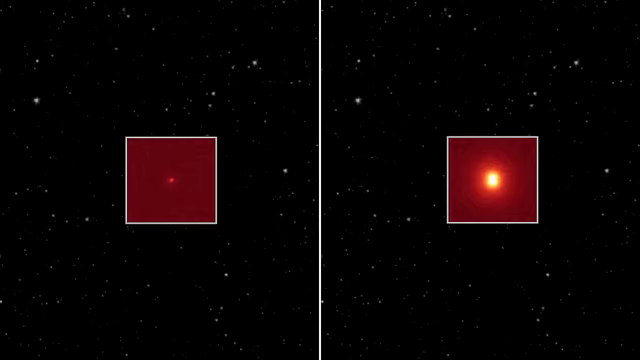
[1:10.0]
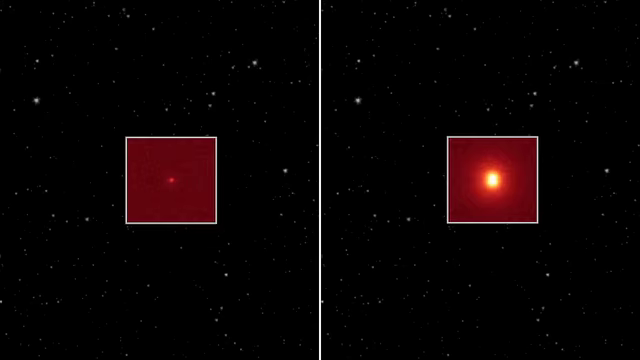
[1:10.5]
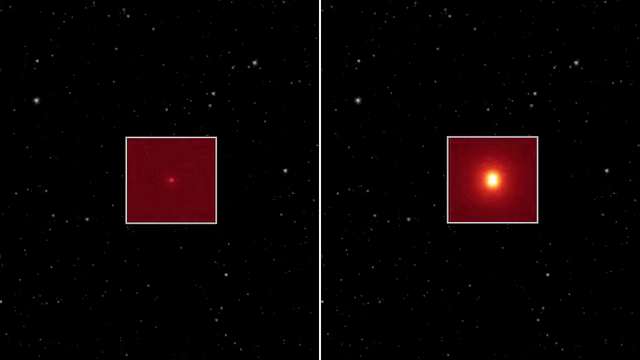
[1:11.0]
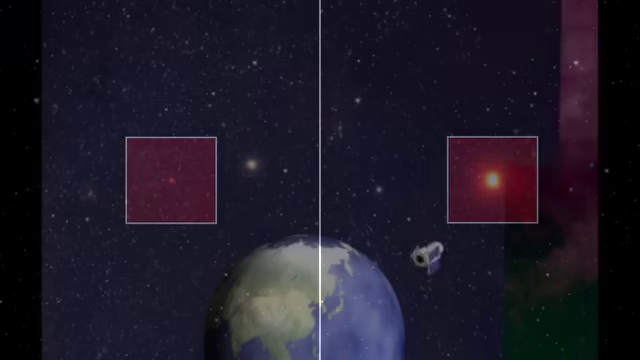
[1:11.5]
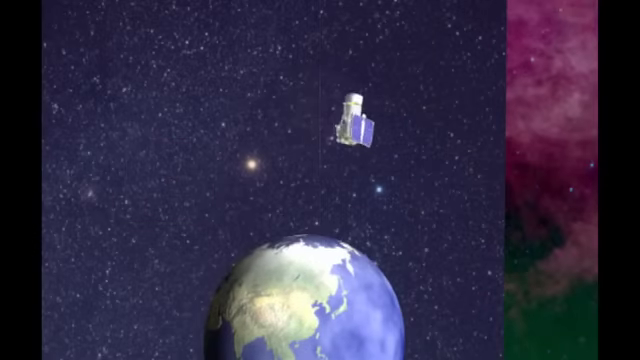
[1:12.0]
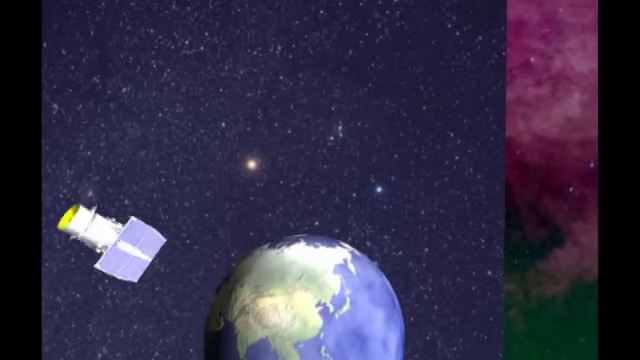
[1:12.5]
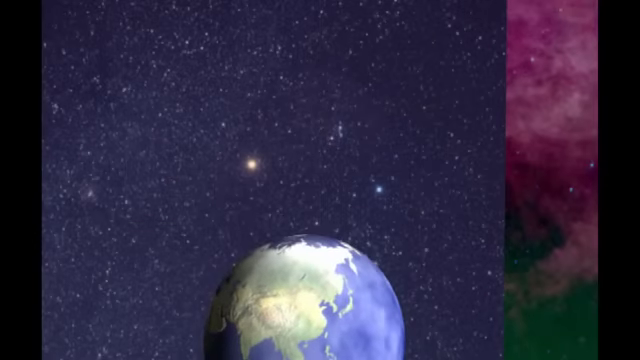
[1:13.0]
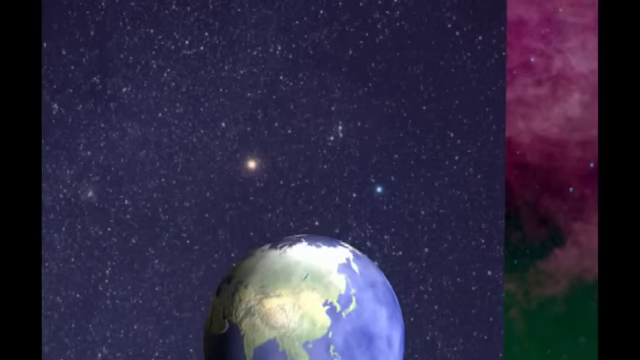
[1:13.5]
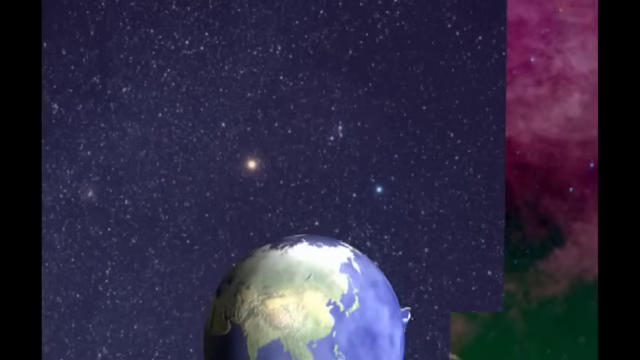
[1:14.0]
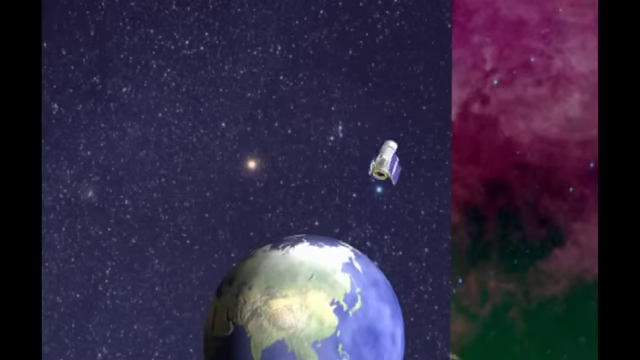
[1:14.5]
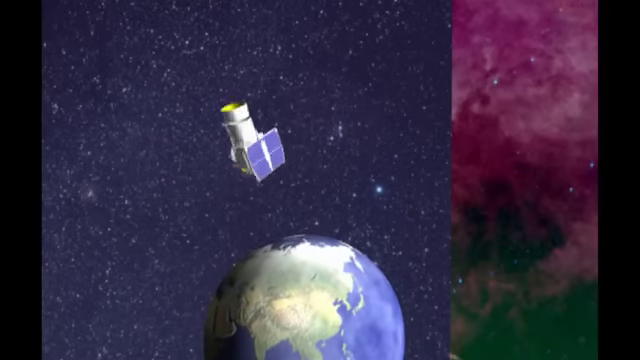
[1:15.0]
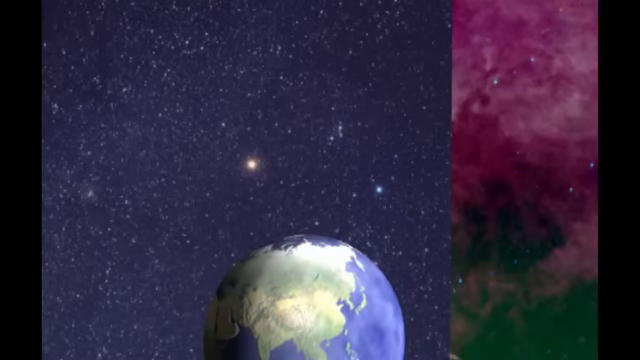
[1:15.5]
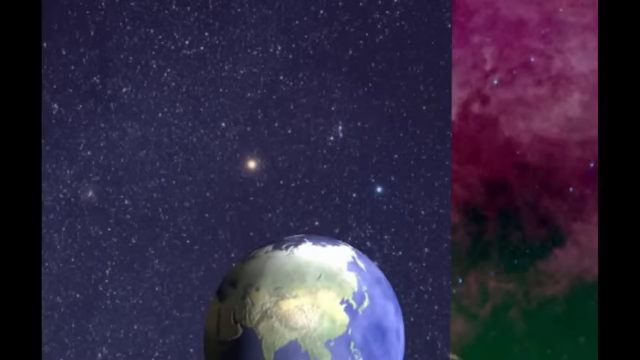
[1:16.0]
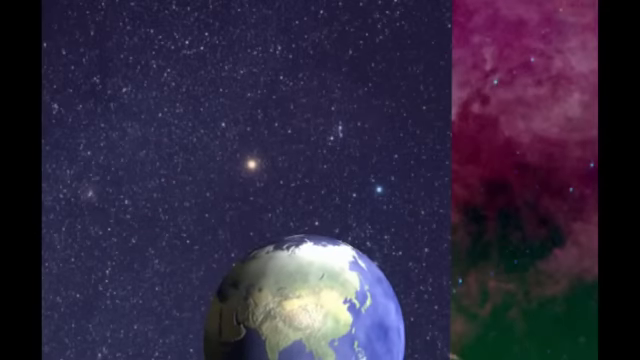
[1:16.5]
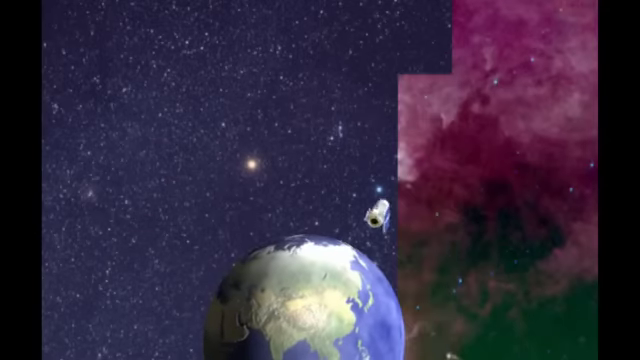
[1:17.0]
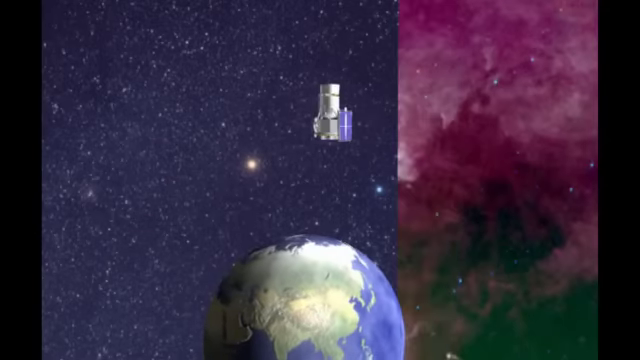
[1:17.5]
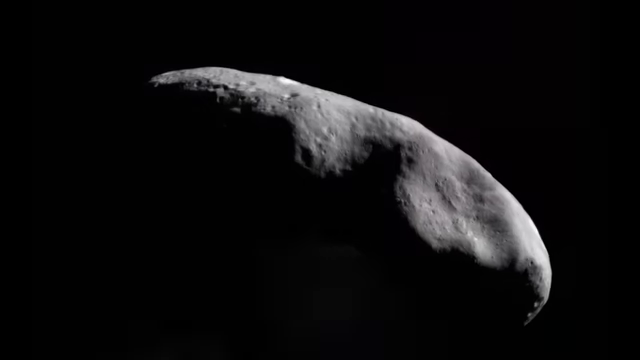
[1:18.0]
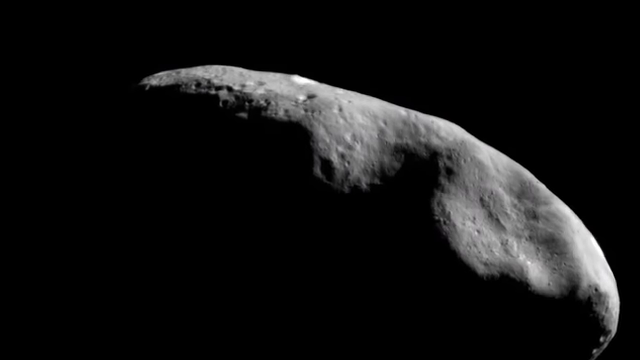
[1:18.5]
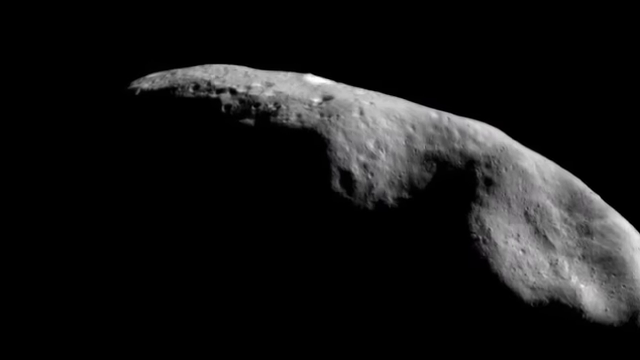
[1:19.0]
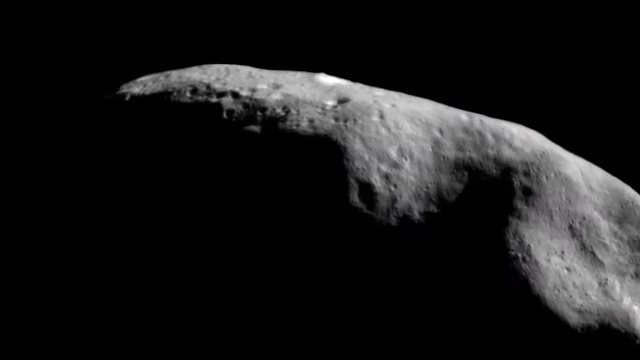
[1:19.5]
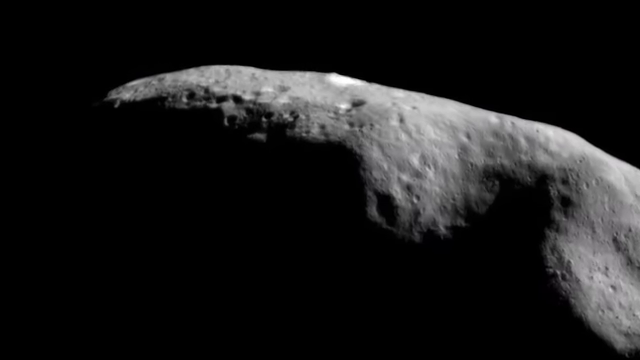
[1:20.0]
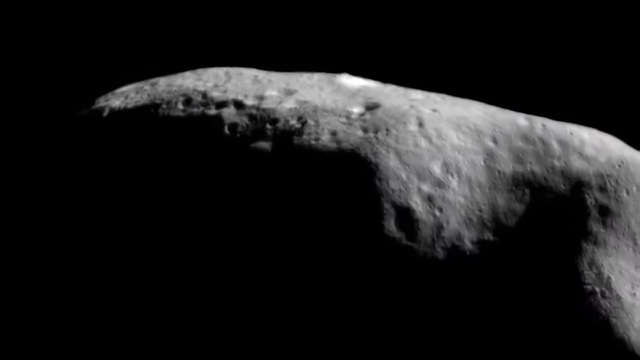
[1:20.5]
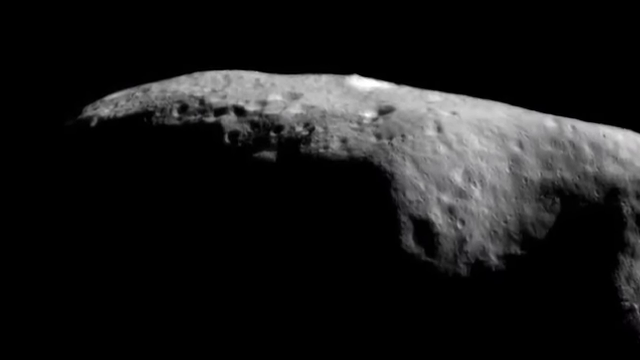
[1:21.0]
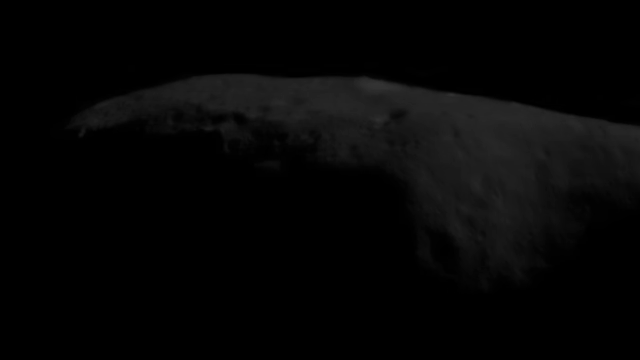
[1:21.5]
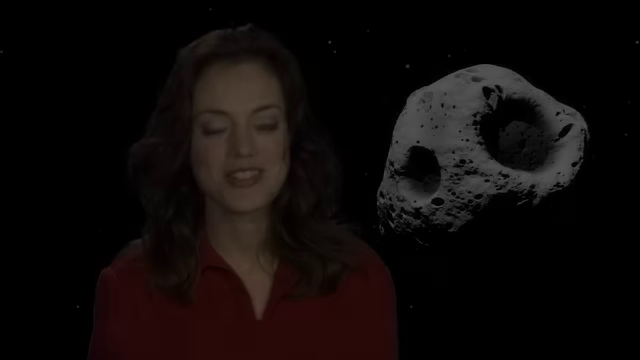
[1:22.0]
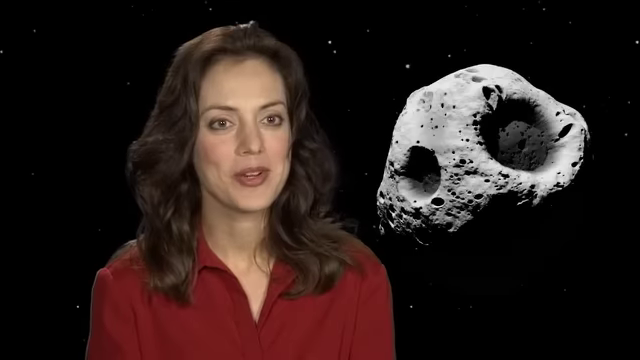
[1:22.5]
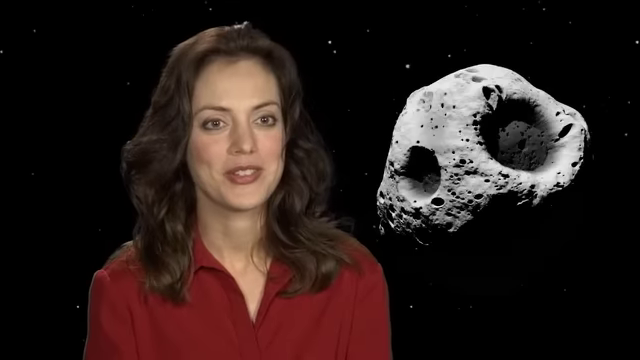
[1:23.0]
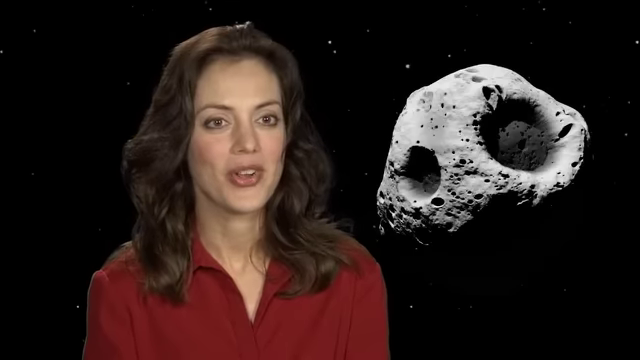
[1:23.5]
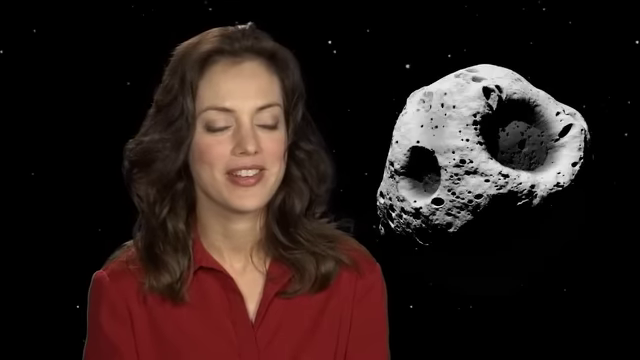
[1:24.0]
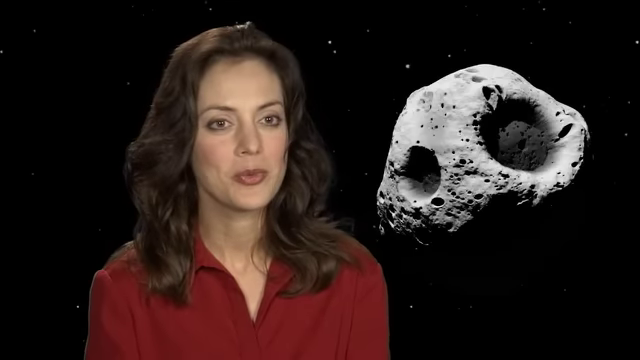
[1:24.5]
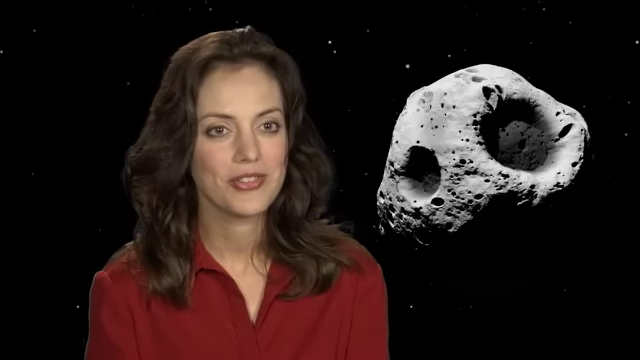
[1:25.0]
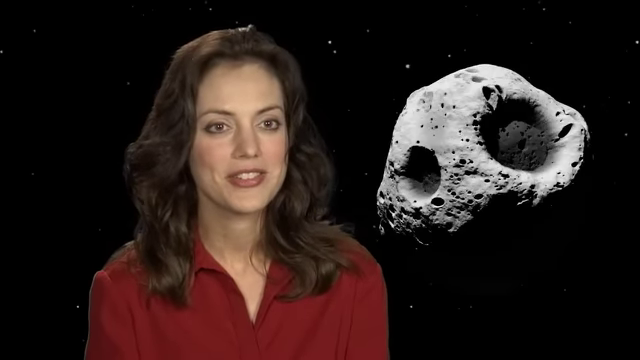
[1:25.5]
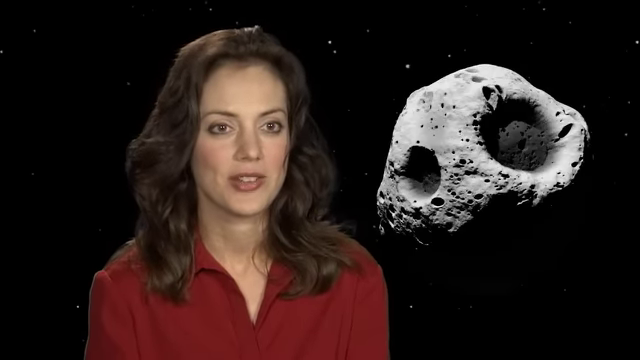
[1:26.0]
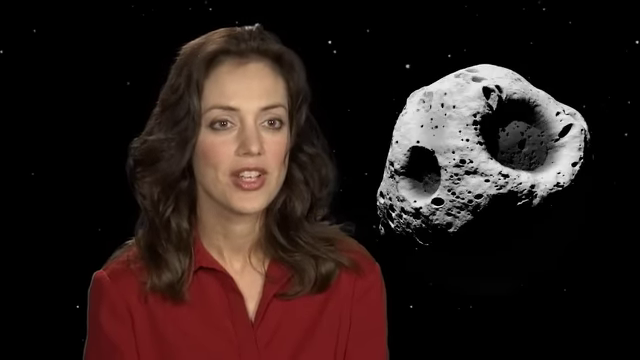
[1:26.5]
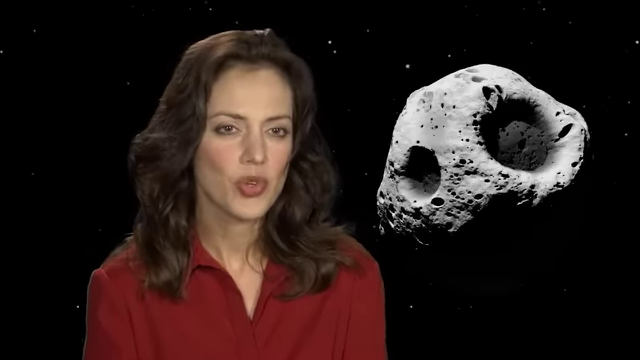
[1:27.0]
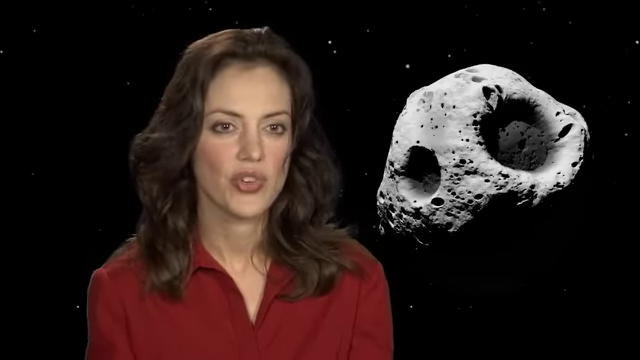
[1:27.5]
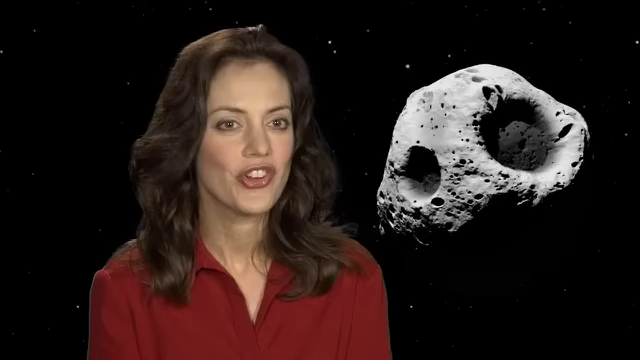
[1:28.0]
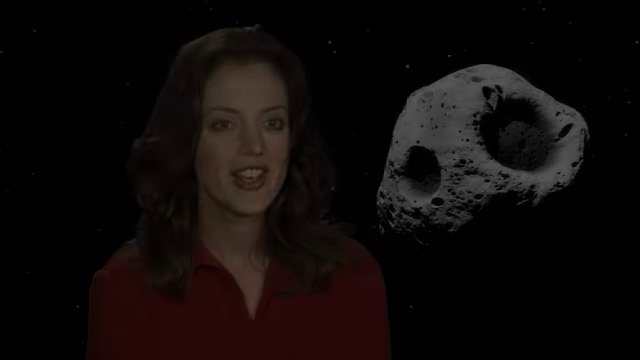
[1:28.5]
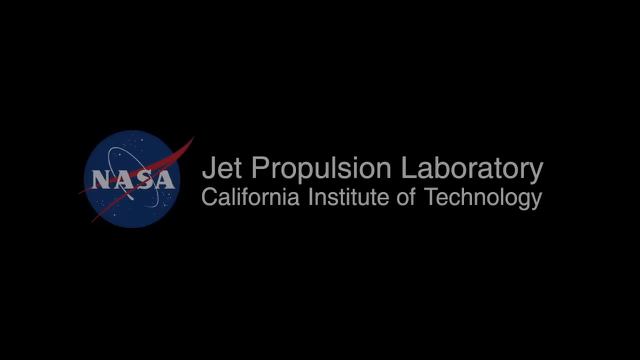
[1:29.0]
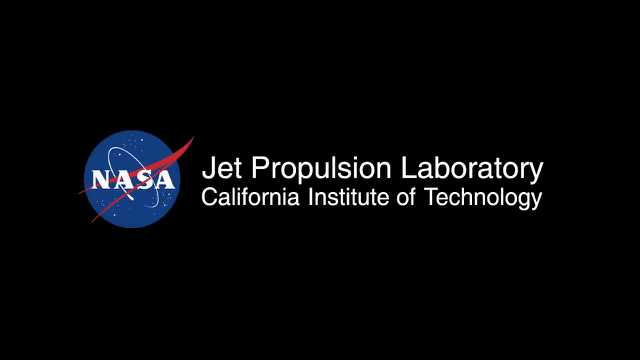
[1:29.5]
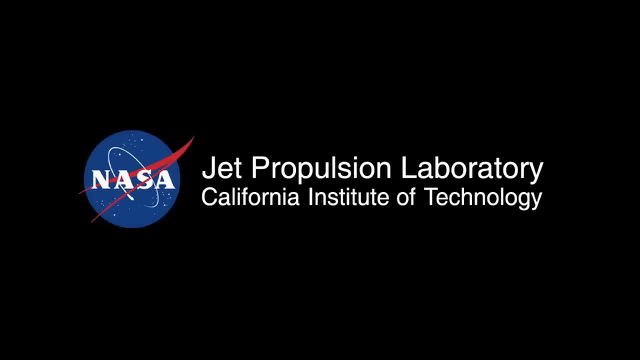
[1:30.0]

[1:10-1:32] The screen is divided, with a background of dark space and a few places of light. There are two squares, one in the middle of each side, and each square has red. In the center of the left one is a smaller white dot, and in the right one a much larger, bright white-yellow dot, perhaps an asteroid. Next, a computer-generated Earth appears with a computer-generated satellite spinning around it. Then comes a computer-generated image of what is presumably an asteroid, looking kind of like the moon. Finally, the mid-40s woman with brown hair and a red shirt speaks into the camera, with the asteroid over her shoulder. The video is credited to Jet Propulsion Laboratory, California Institute of Technology, with a NASA emblem to the left.